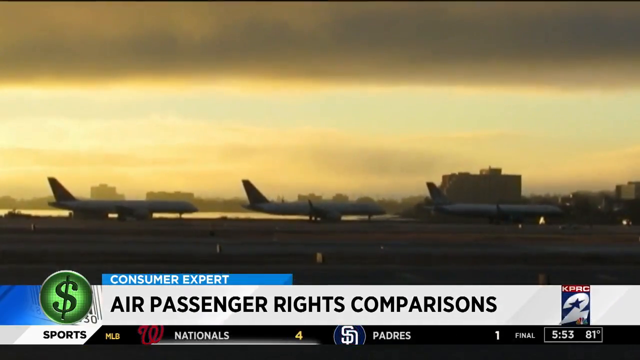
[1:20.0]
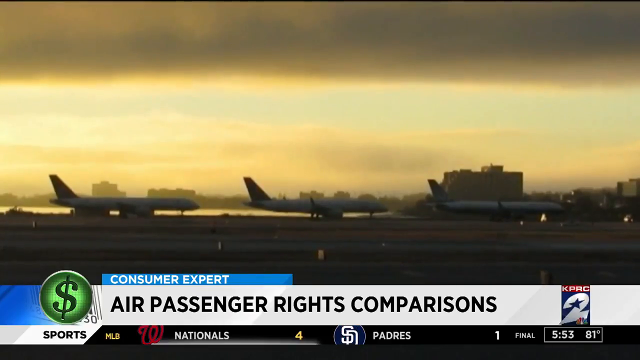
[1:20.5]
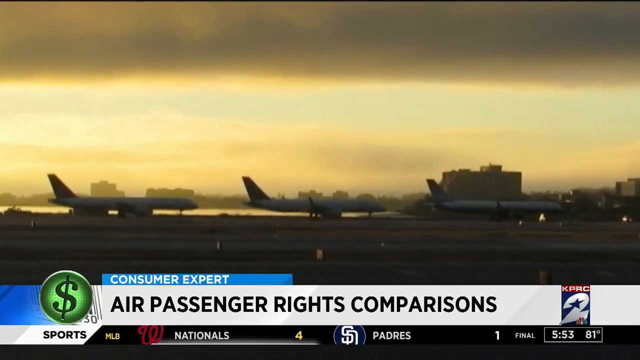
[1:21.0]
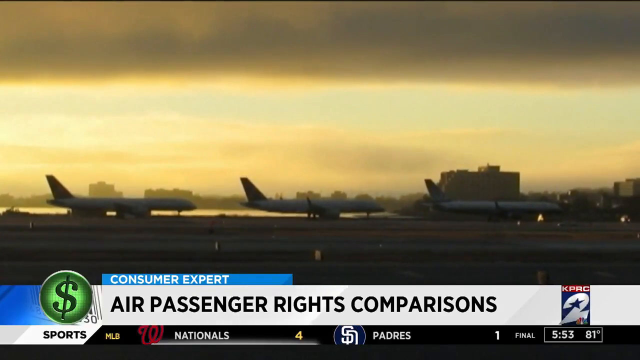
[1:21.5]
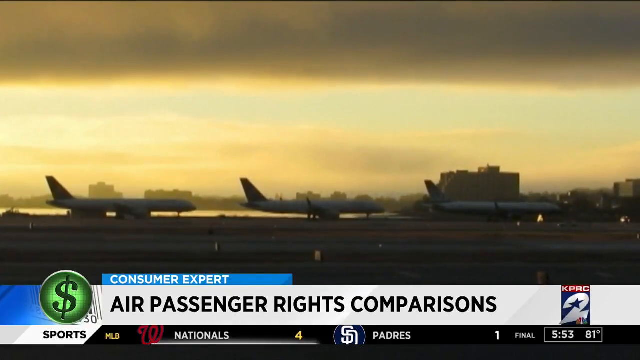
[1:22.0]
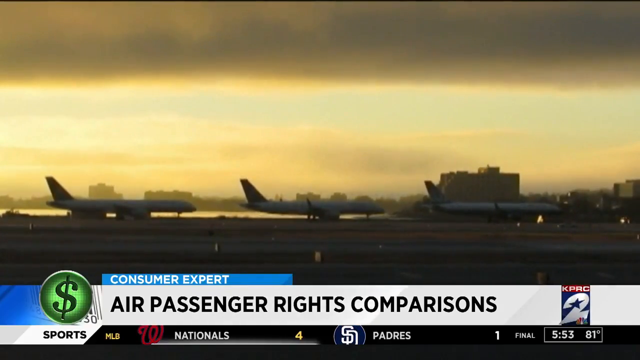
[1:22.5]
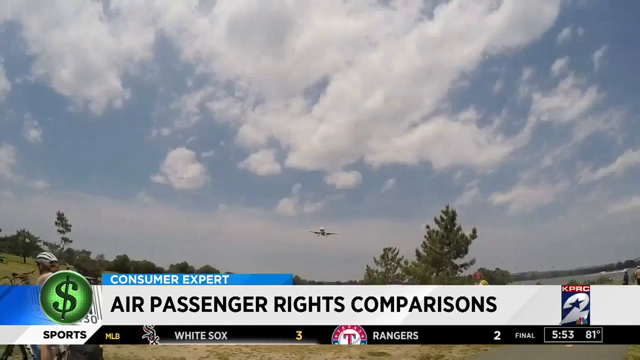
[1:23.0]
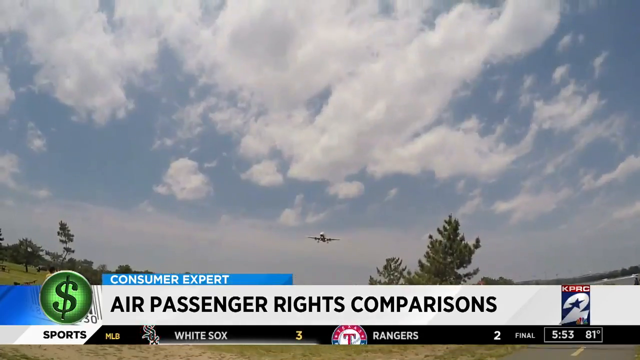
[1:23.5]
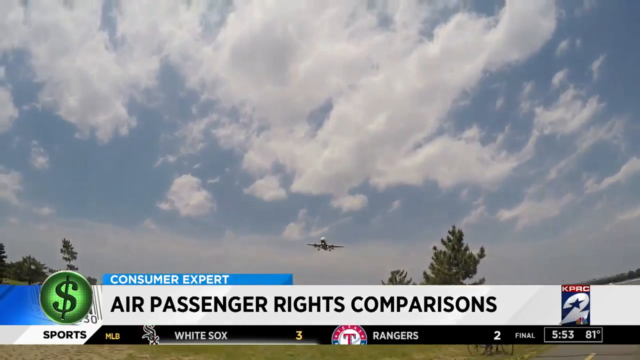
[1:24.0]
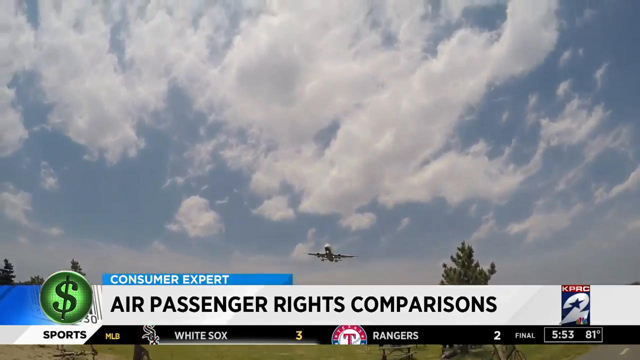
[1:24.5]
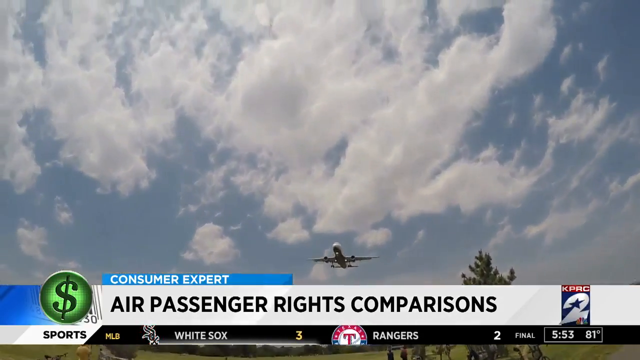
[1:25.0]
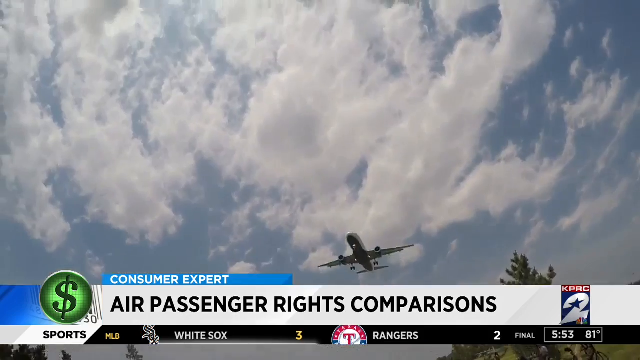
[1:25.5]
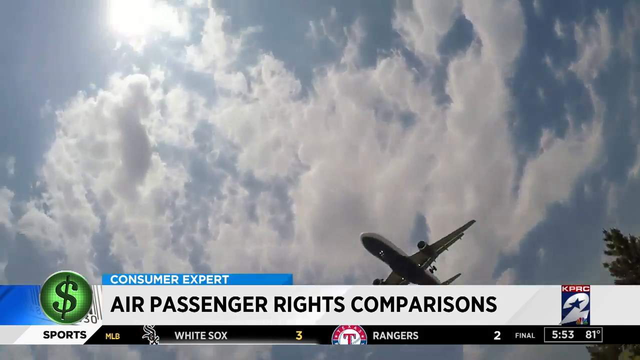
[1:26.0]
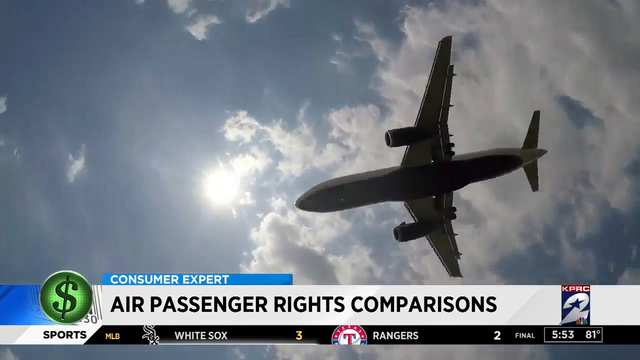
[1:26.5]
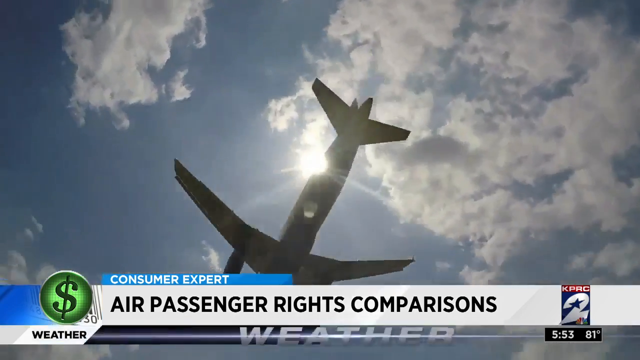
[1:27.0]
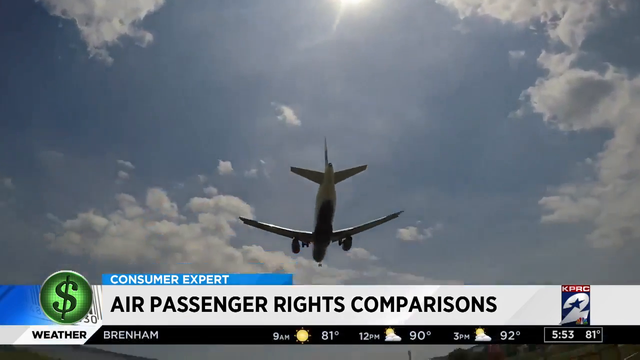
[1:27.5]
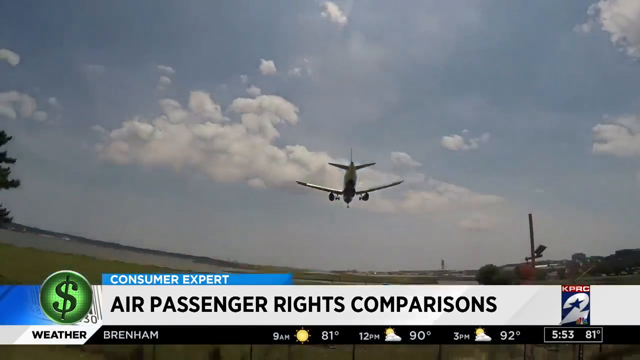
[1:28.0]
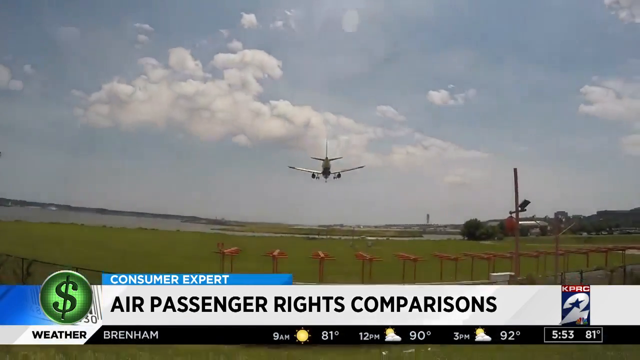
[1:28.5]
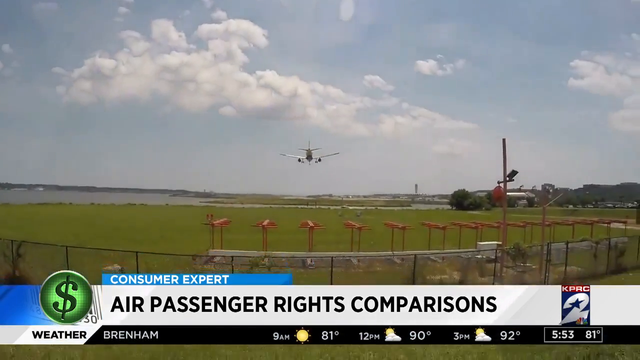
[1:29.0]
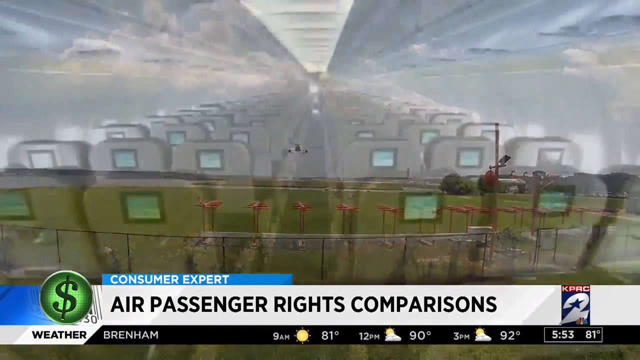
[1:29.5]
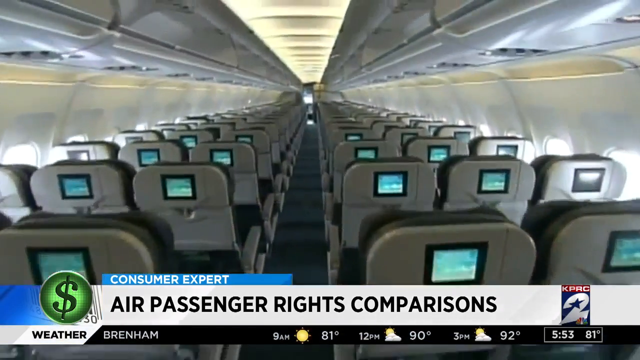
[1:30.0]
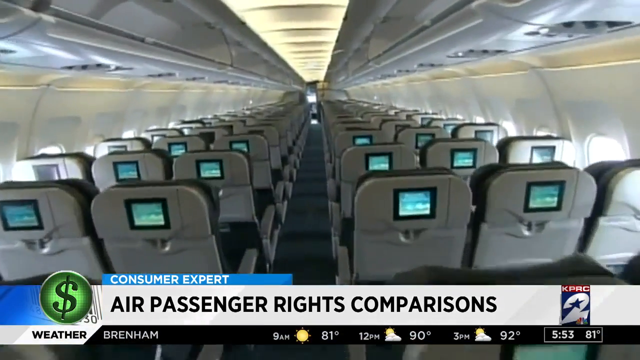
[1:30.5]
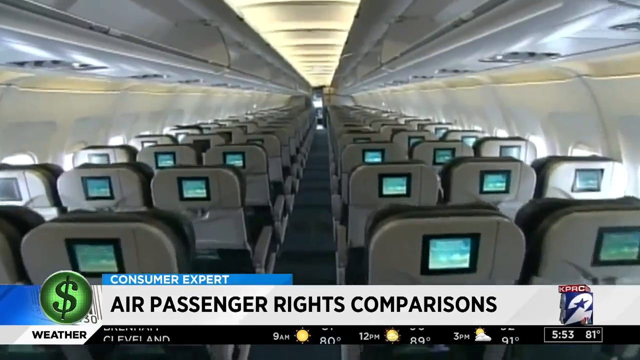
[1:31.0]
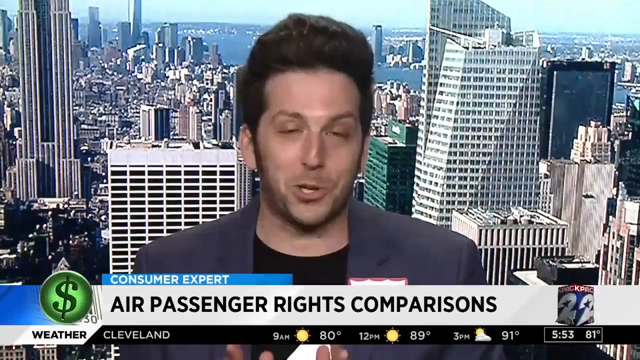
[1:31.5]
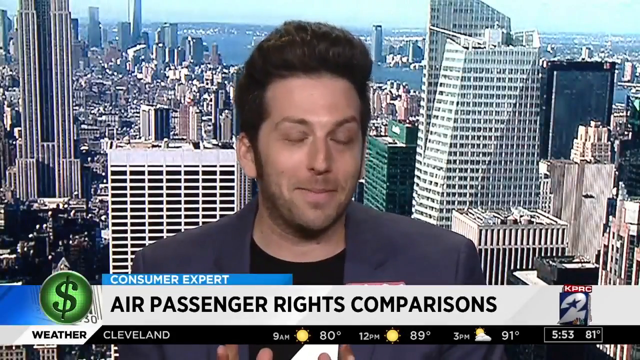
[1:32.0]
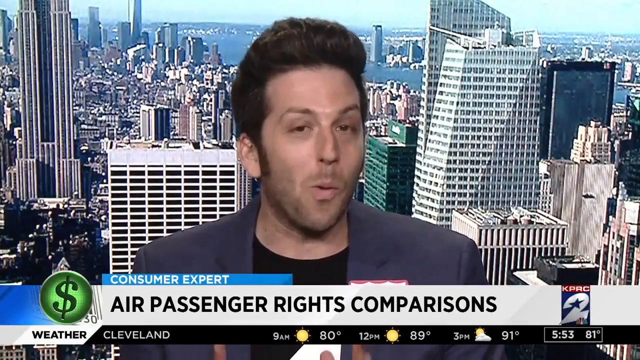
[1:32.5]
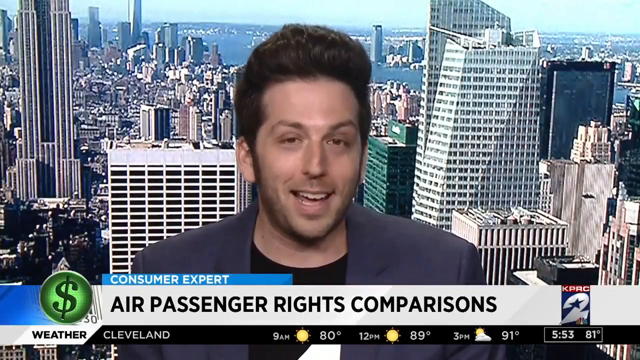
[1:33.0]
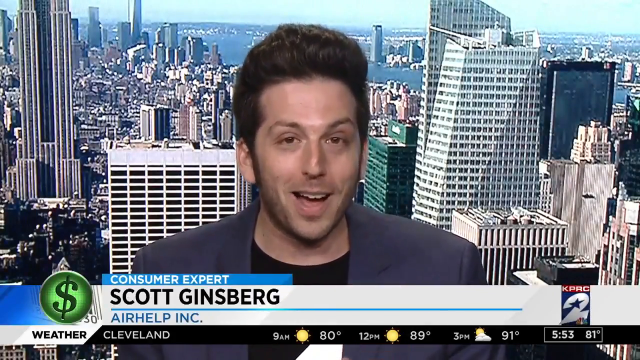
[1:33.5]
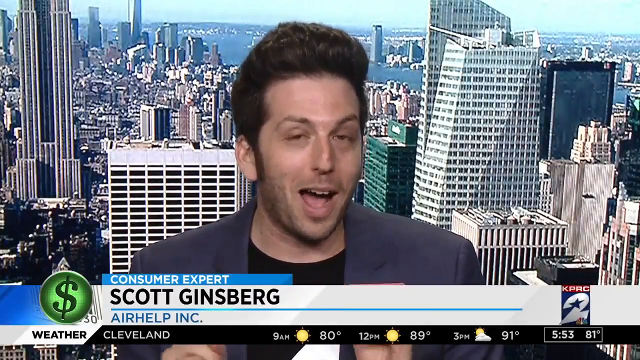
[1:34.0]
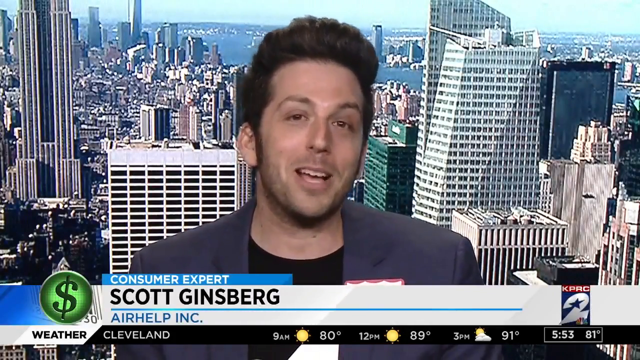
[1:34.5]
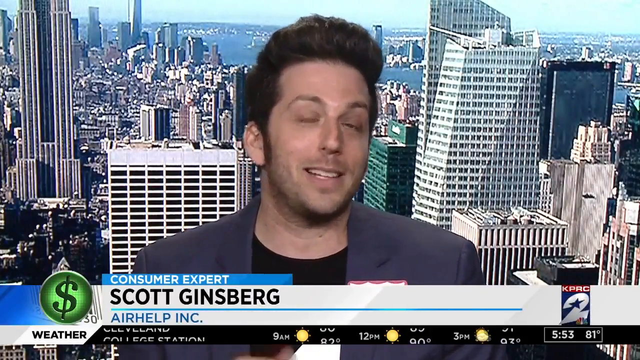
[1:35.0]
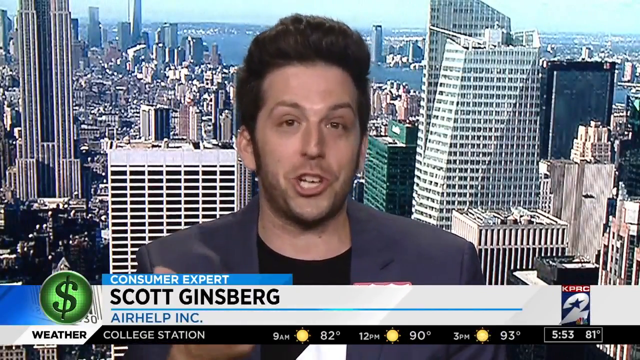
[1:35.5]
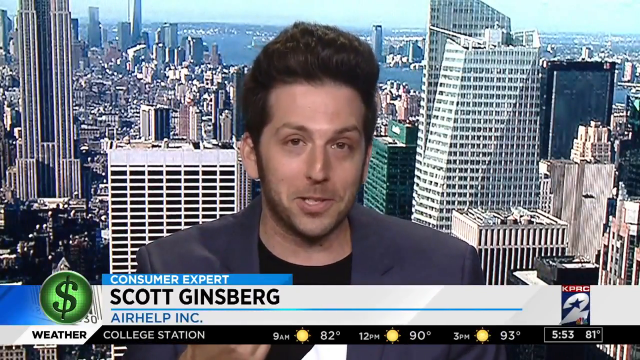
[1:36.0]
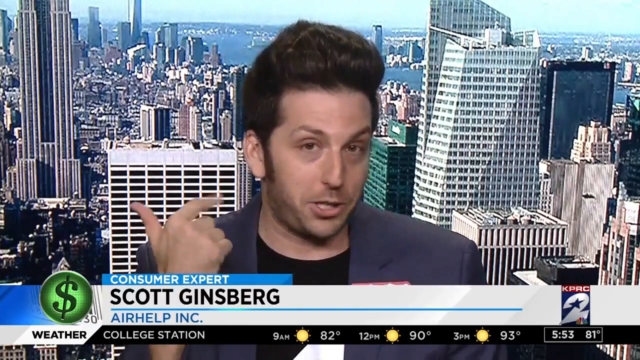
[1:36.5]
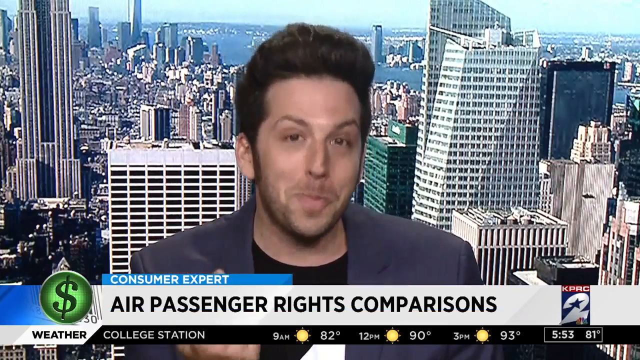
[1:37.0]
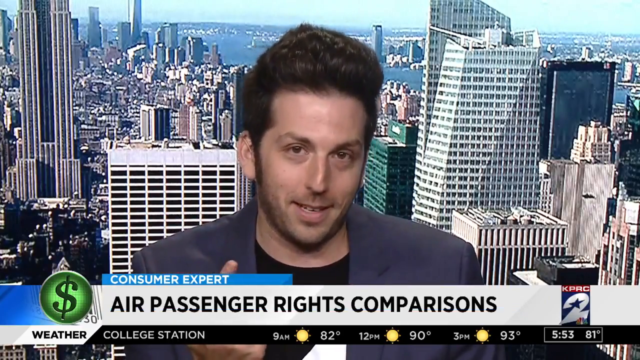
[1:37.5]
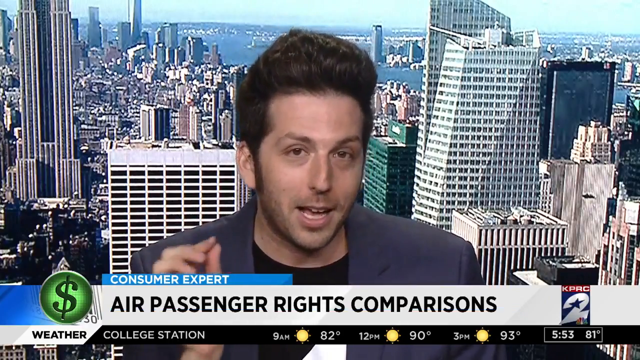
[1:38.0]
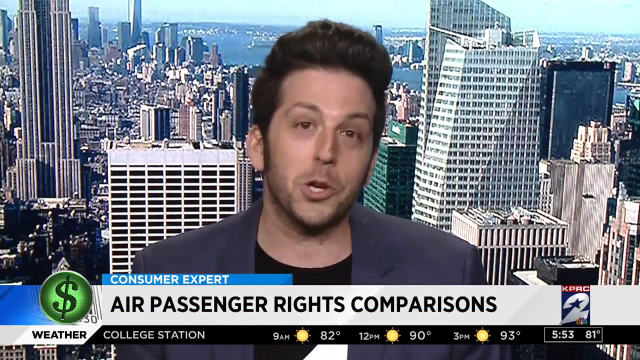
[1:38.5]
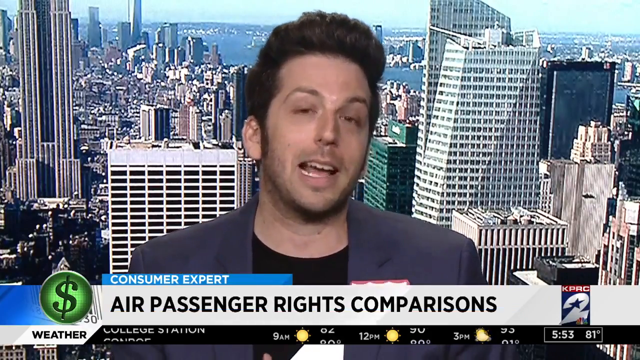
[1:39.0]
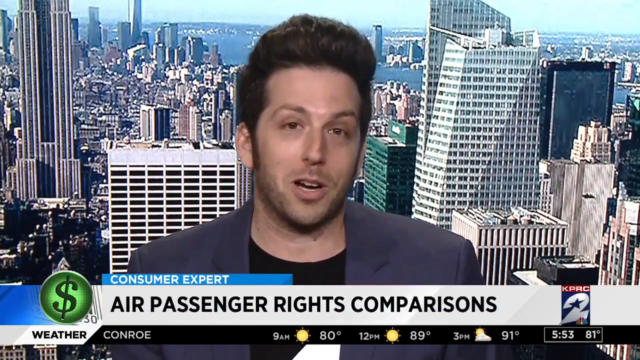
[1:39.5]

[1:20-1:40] Outside, the sky has scattered clouds and a plane is in the air, with some trees visible. The plane flies away, and in a field close by there are some cameras pointing, monitoring the plane as it flies away. An empty plane cabin is then shown, with gray seats and a screen in front of each seat. A man with short hair, a navy blue jacket and a black shirt appears, with a large city close to a large body of water behind him. He is consumer expert Scott Ginzburg from AirHelp Inc. He raises his fingers one by one, apparently counting off points.